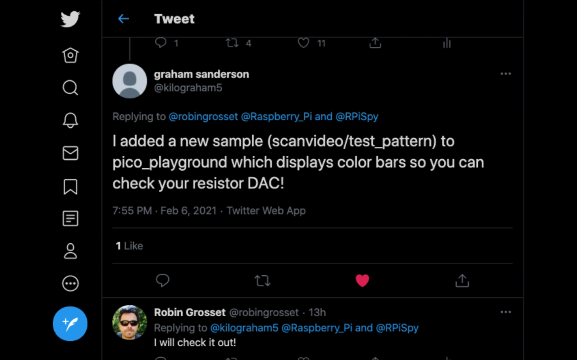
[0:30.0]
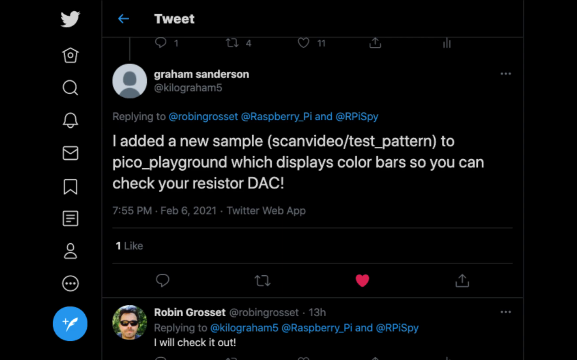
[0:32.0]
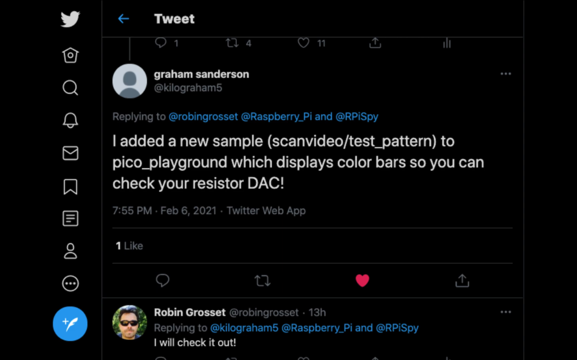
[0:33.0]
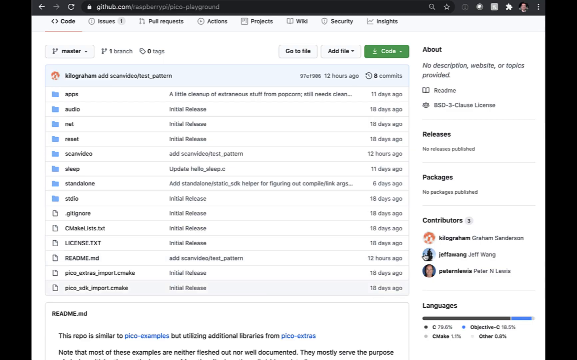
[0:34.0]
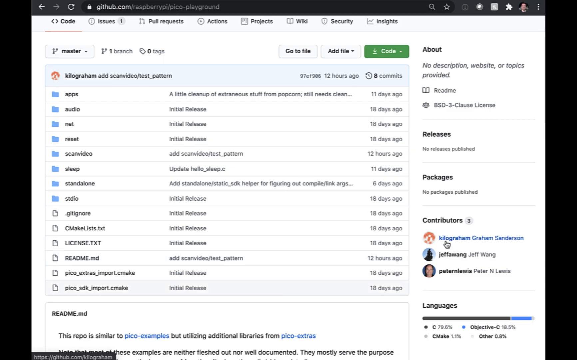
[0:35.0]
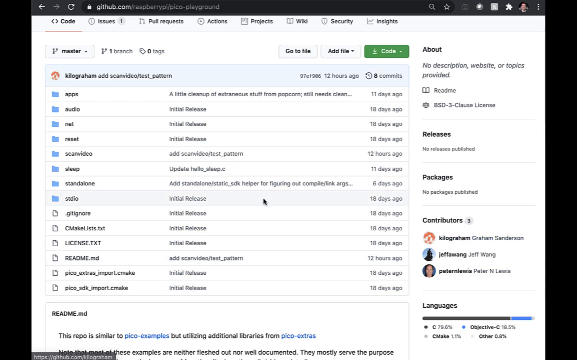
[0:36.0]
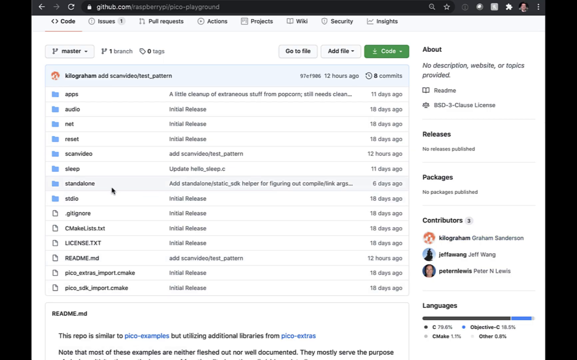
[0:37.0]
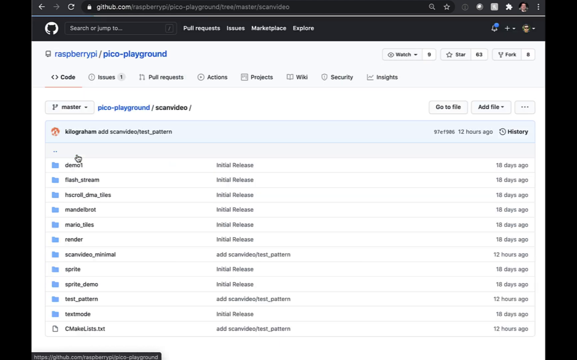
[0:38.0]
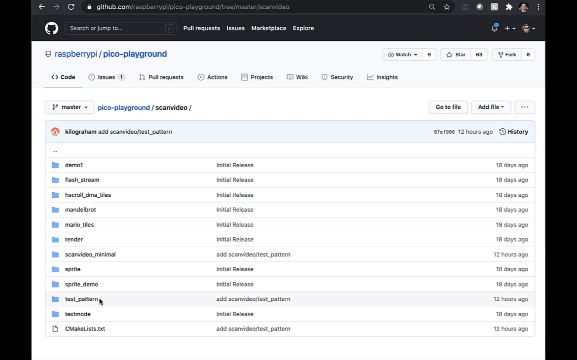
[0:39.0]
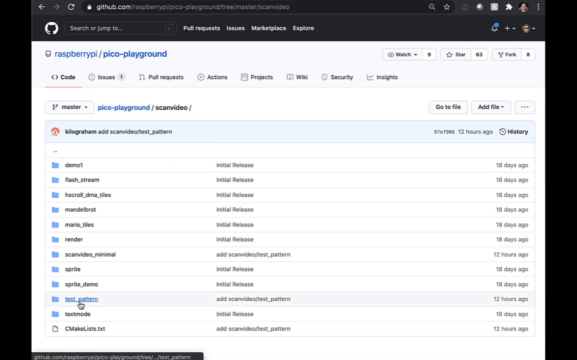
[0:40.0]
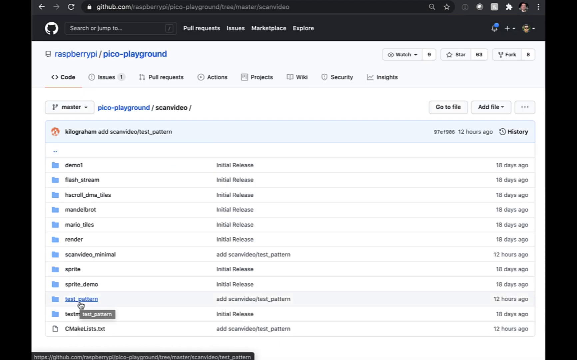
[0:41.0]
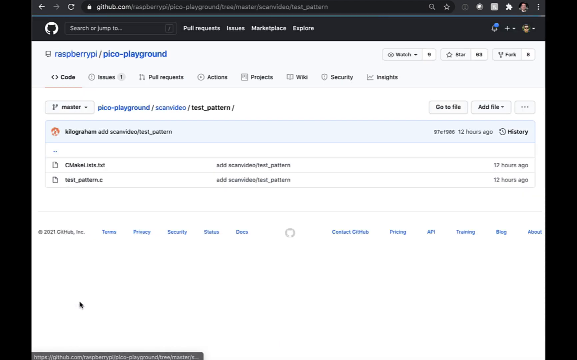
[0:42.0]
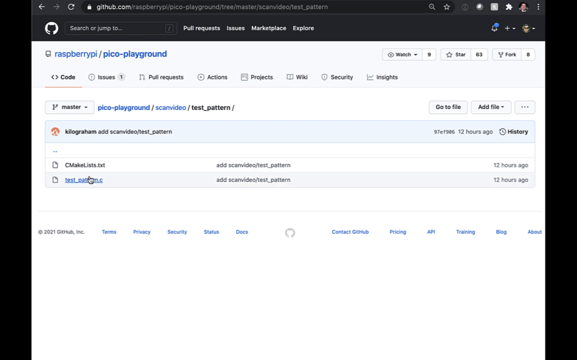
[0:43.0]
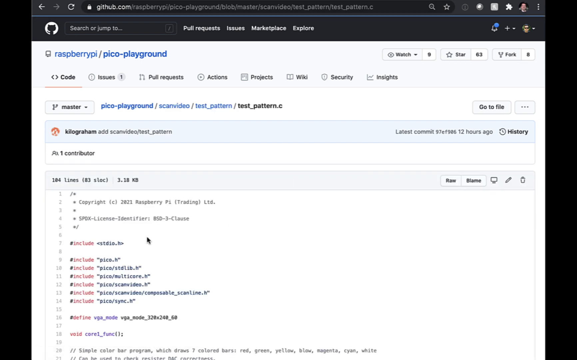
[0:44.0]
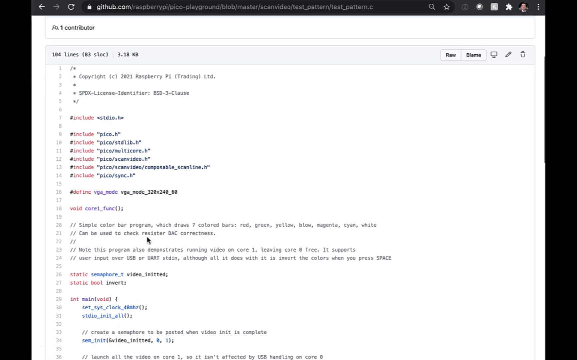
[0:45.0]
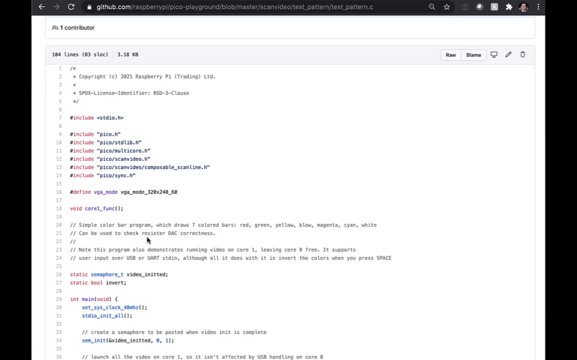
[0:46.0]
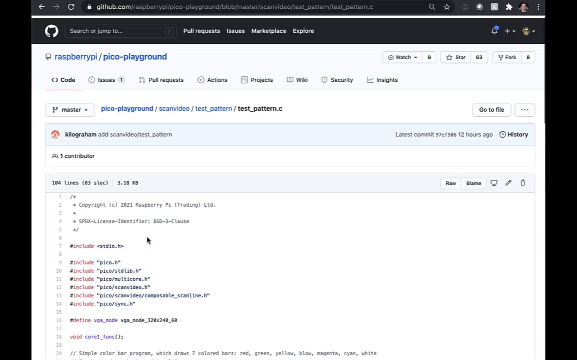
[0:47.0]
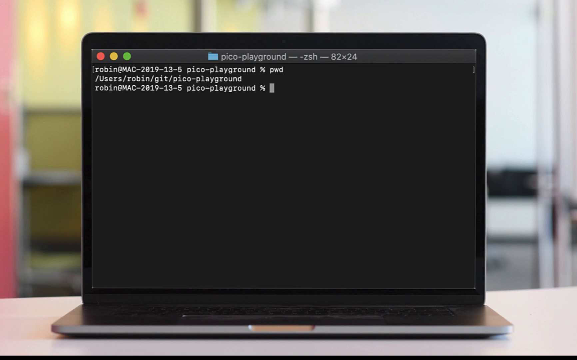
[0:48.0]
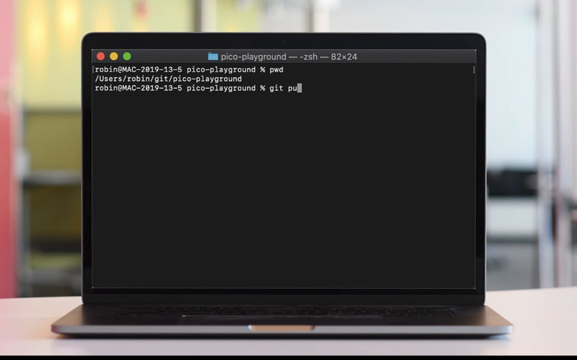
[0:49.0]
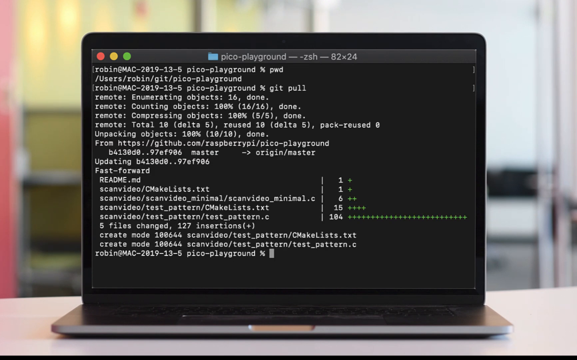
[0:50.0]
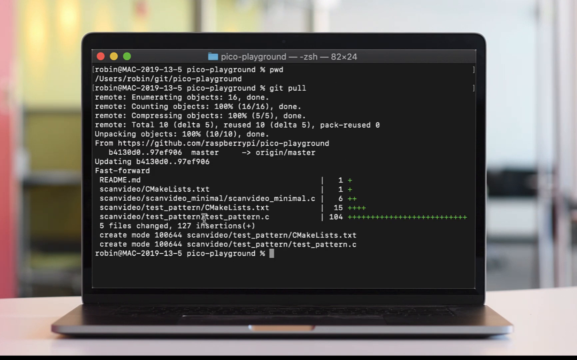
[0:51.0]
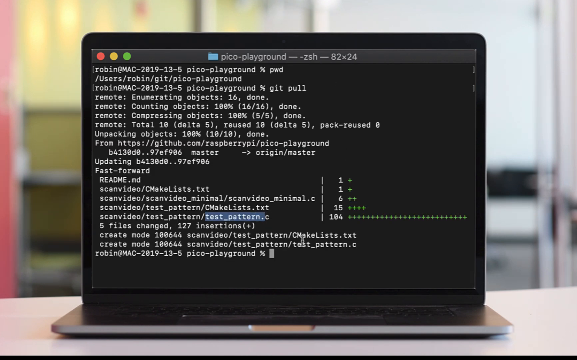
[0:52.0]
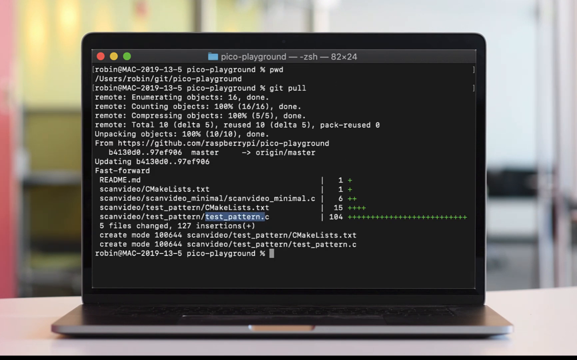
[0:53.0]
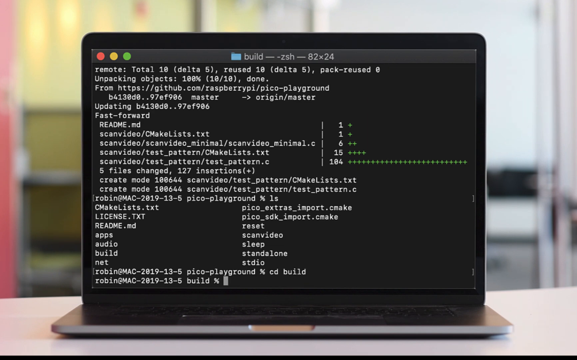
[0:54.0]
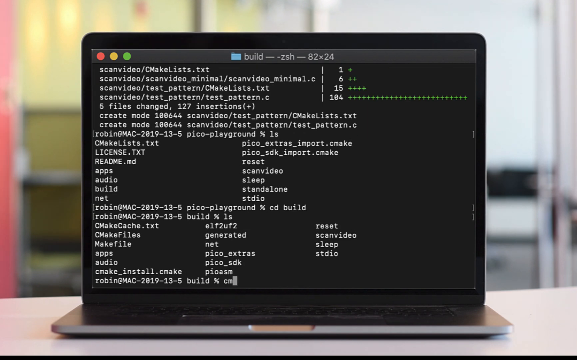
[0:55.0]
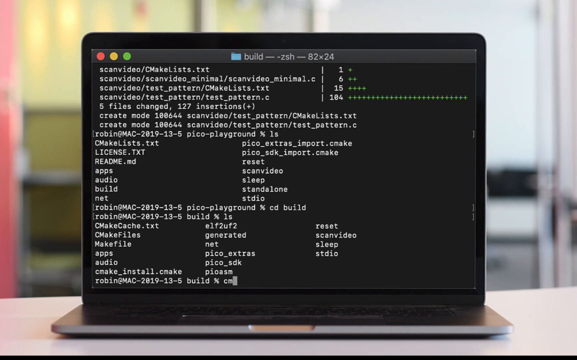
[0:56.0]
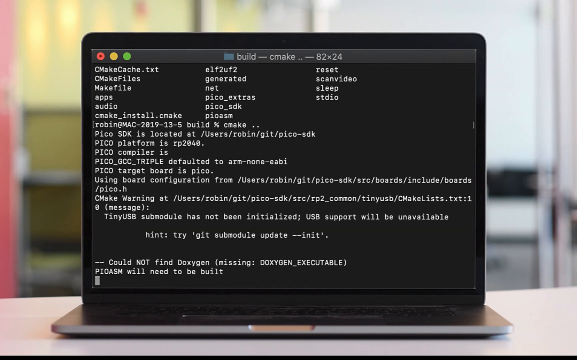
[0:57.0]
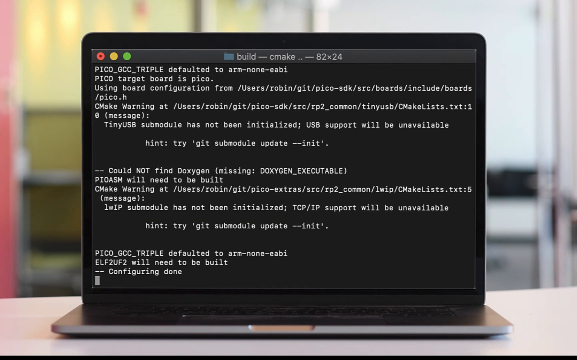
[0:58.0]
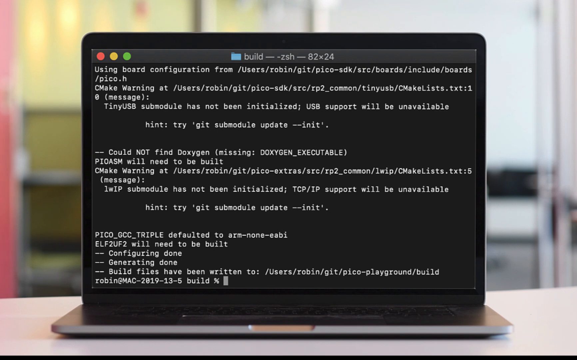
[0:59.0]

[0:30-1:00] A post on X, formerly known as Twitter, is shown from a person named Graham Sanderson. The post reads "I added a new sample Scan video test pattern to Pico playground which displays color bars." The video transitions to a page for Raspberry Pico Playground with a grid of multiple entries. There are tabs for "go to file," "add file," and "code," and many more tabs above the entries. A cursor moves across the page and clicks one of the entries, which opens another page; it clicks another entry and another, finally arriving at a page with code written on it. The video then transitions to a laptop on a table with a black screen, where code for Pico Playground is being written, moving fast from left to right across the screen and all the way down until it is completed.